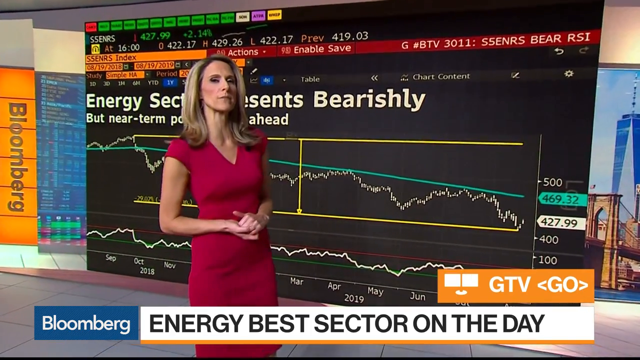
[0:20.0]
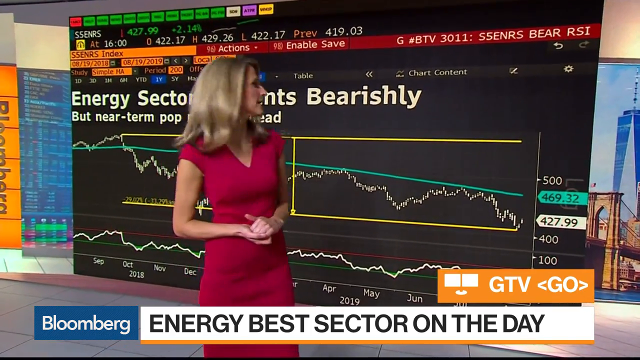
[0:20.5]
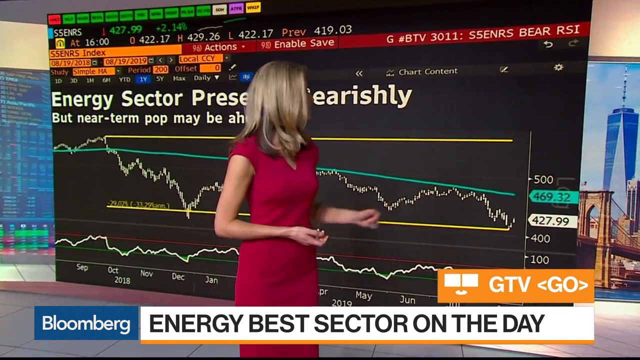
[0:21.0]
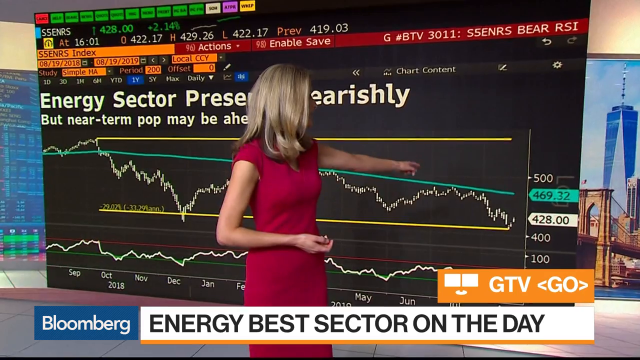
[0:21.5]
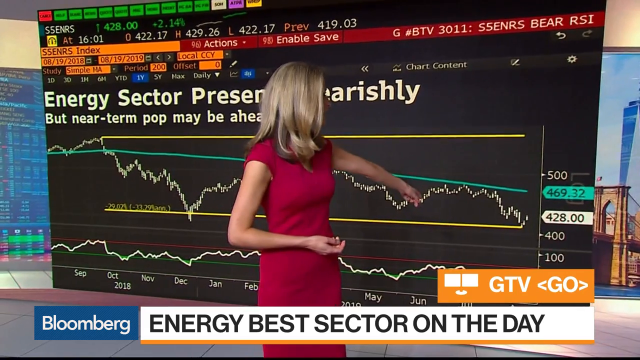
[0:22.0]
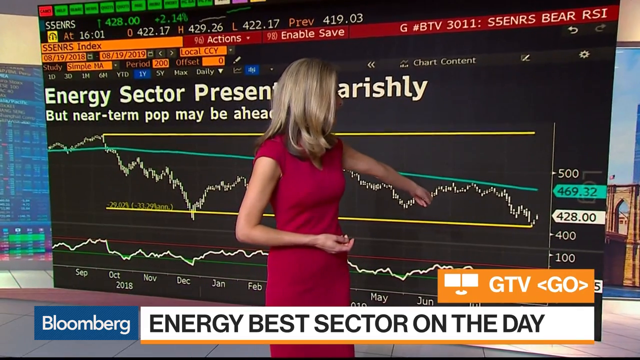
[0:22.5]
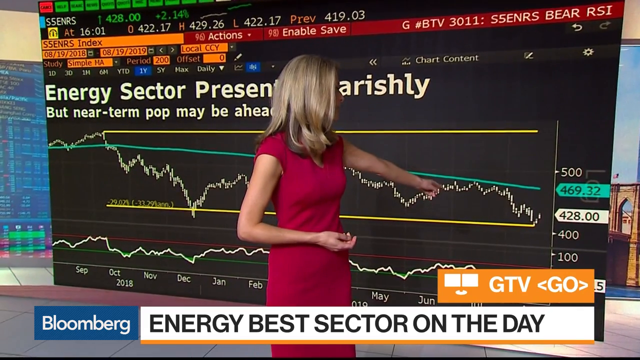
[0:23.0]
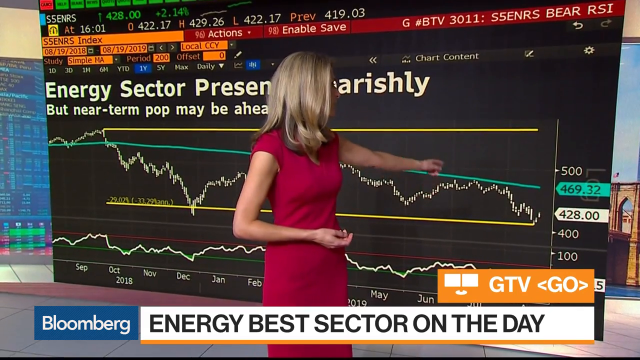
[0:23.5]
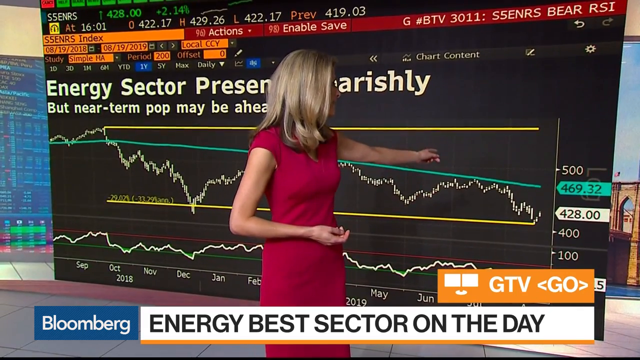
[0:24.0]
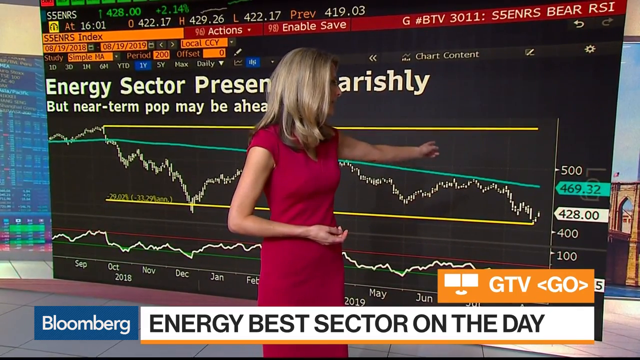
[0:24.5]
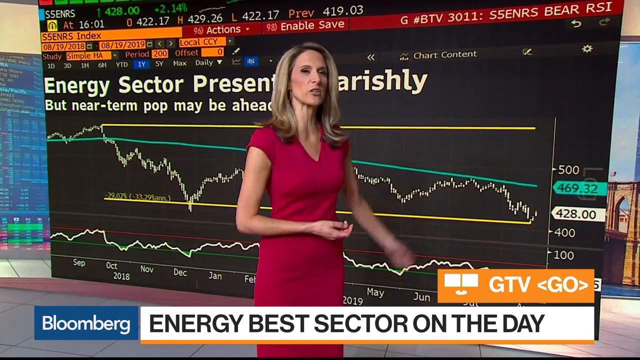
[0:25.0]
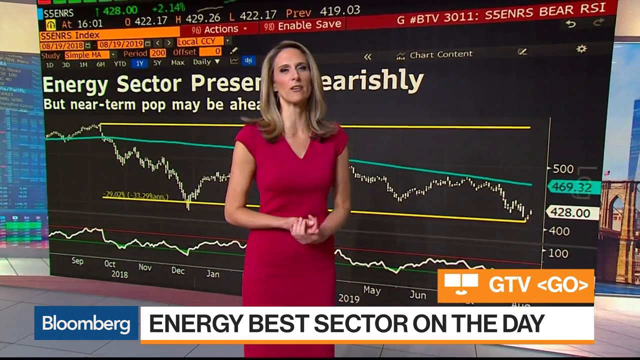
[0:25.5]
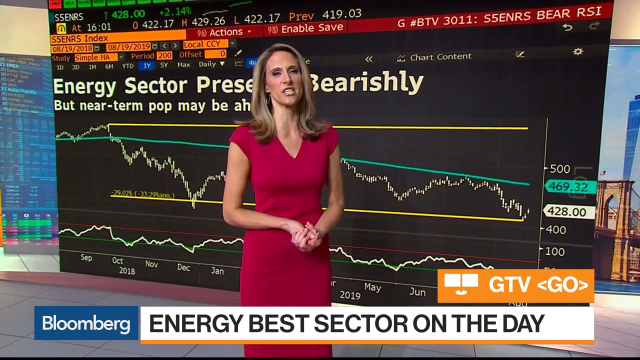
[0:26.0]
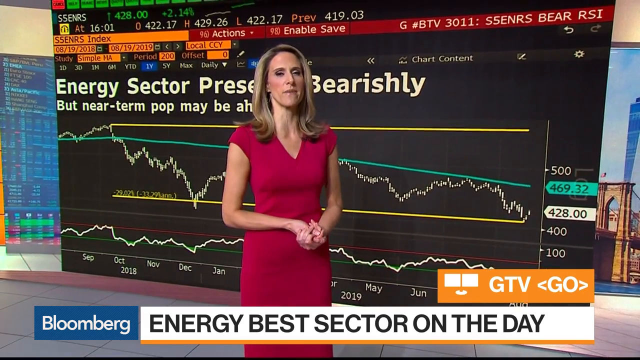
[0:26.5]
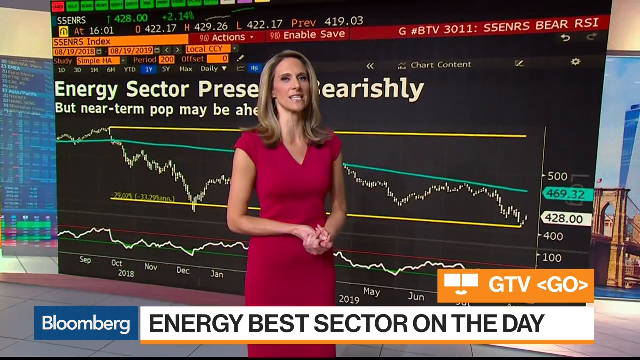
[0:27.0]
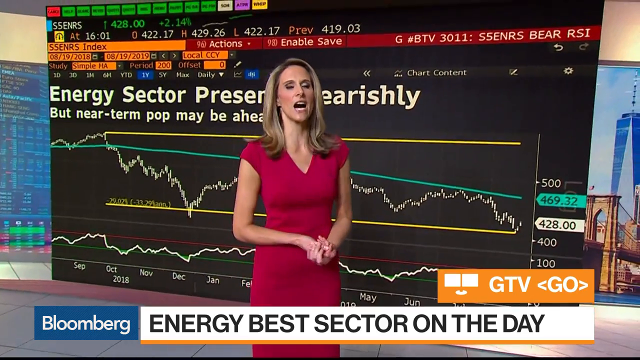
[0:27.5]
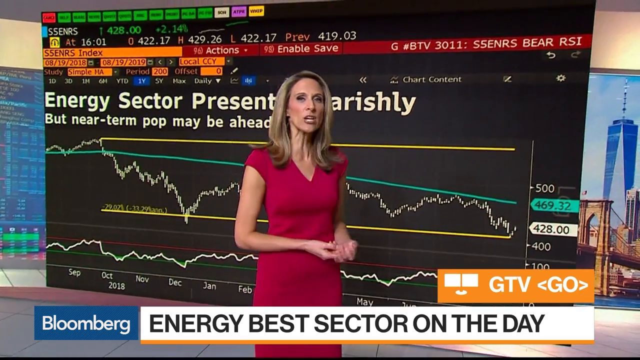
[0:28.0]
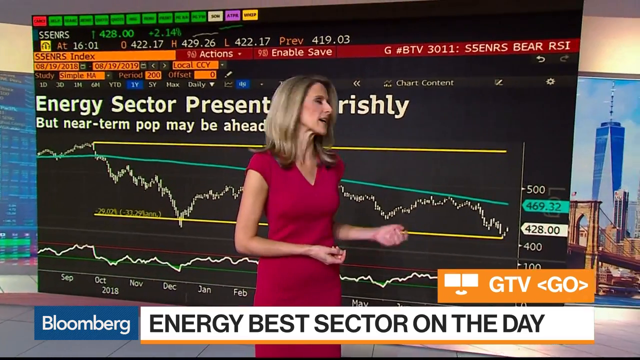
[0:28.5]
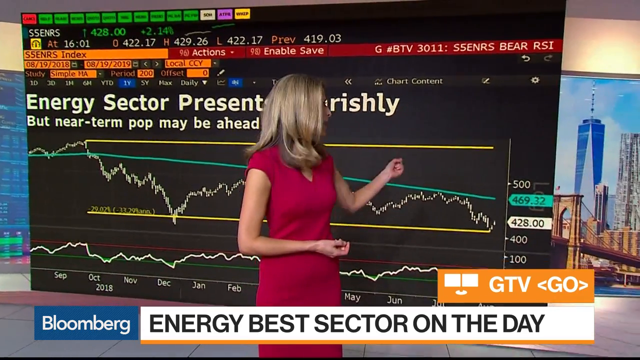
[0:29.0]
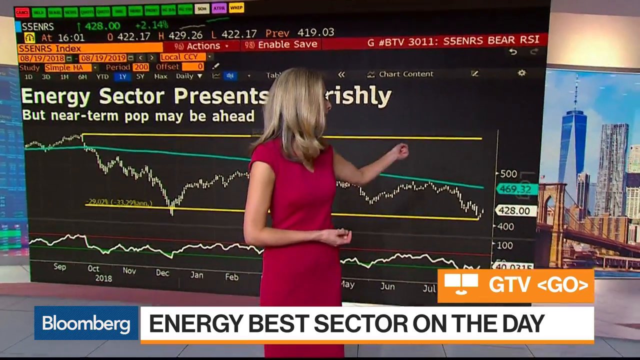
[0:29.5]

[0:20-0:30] A light-skinned, blonde-haired woman in a red dress stands in front of a graph reading "energy sector presents bearishly." The graph has a number of points and trends downward, with a bright green line showing the trend. She walks along the graph, pointing with her left hand at different points, and turns back and forth in front of the camera. At the bottom right of the screen, an orange banner reads "GTVGO" in white lettering, and on the left side an orange banner reads "Bloomberg" in black lettering.